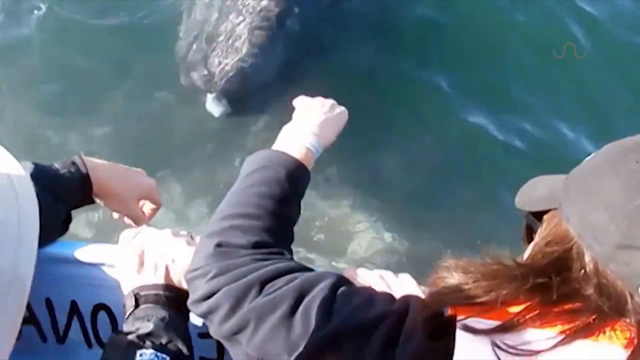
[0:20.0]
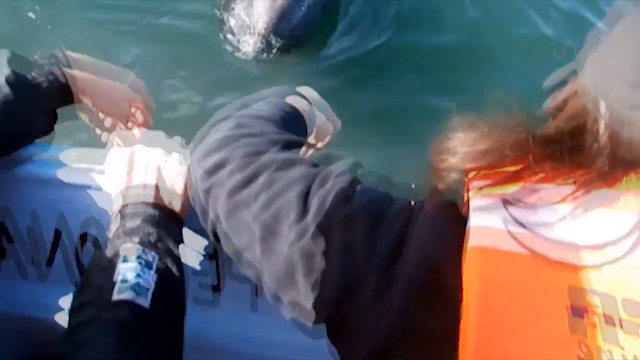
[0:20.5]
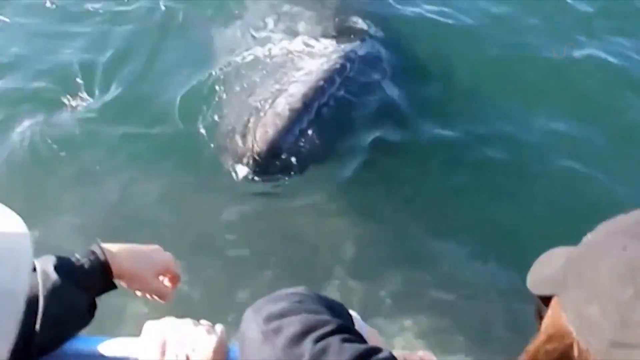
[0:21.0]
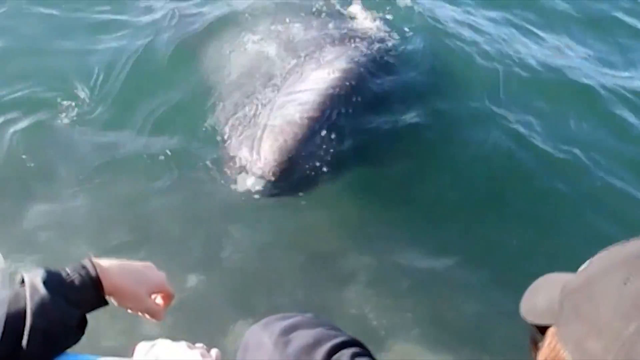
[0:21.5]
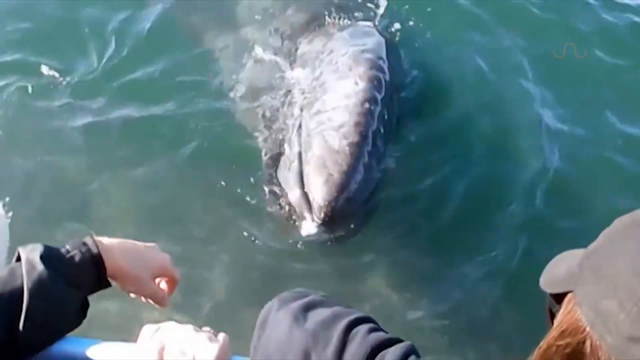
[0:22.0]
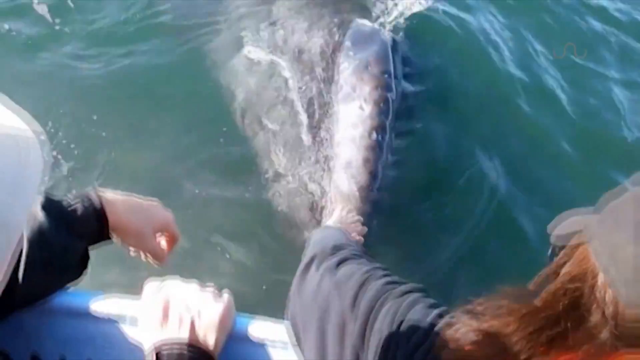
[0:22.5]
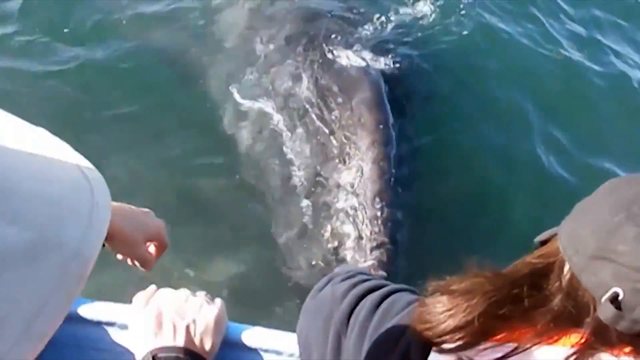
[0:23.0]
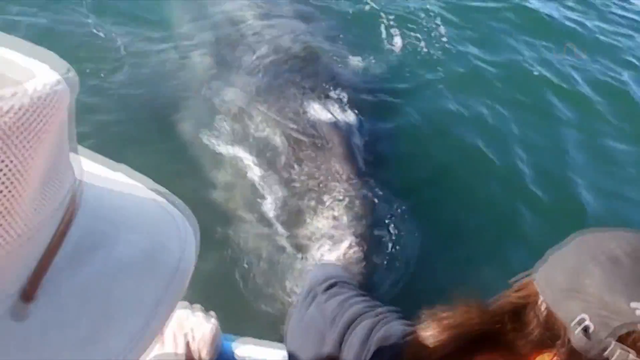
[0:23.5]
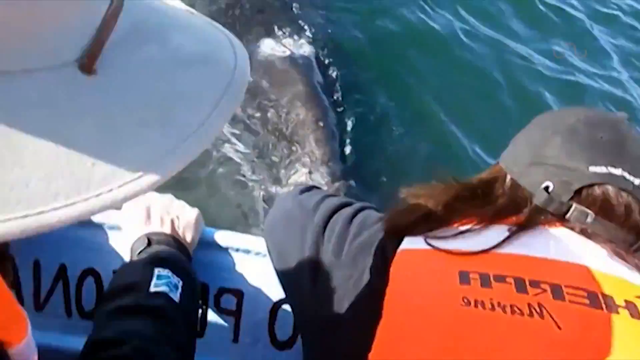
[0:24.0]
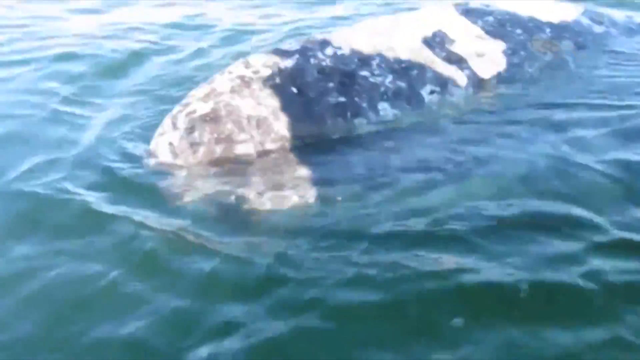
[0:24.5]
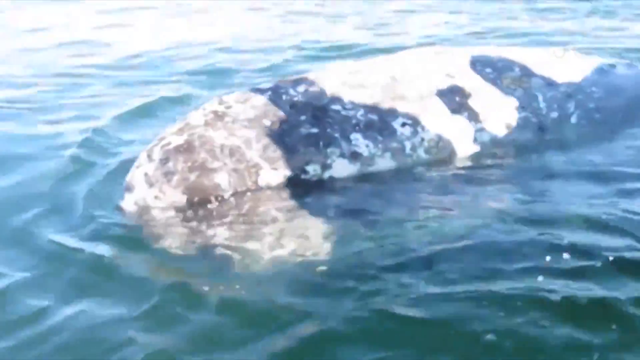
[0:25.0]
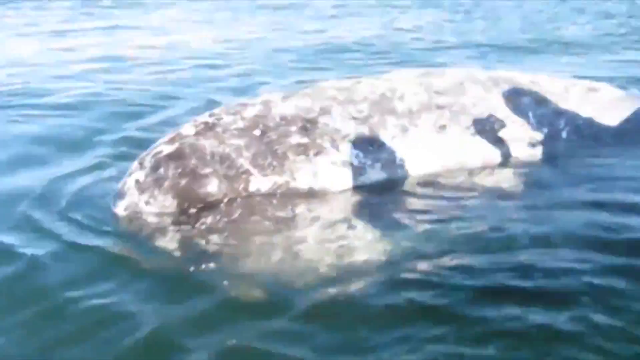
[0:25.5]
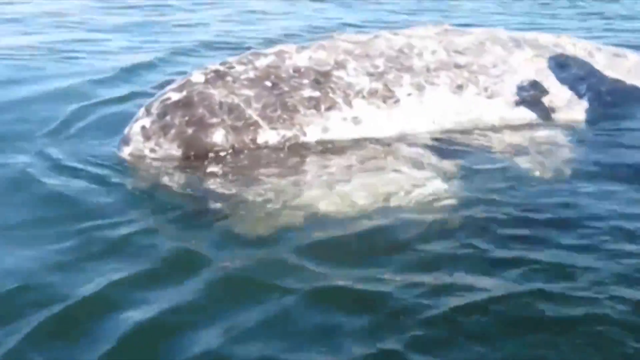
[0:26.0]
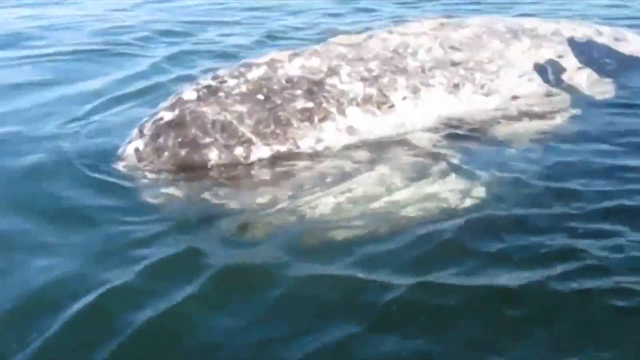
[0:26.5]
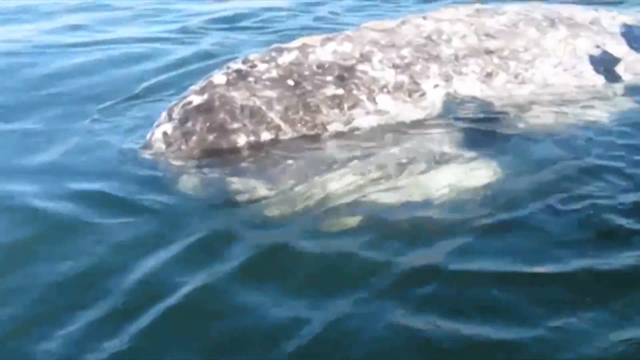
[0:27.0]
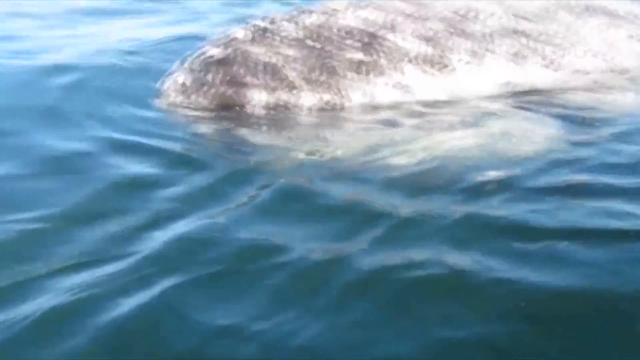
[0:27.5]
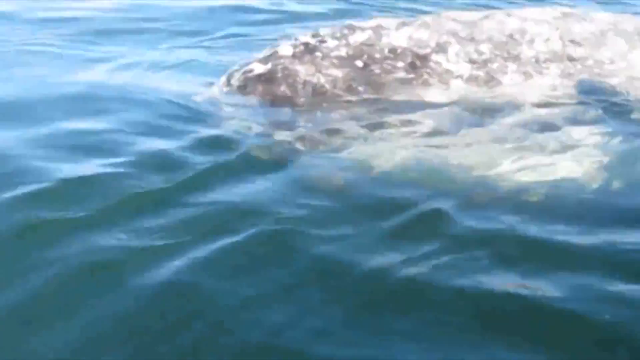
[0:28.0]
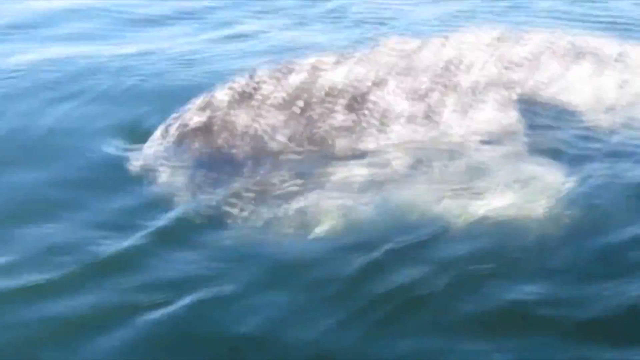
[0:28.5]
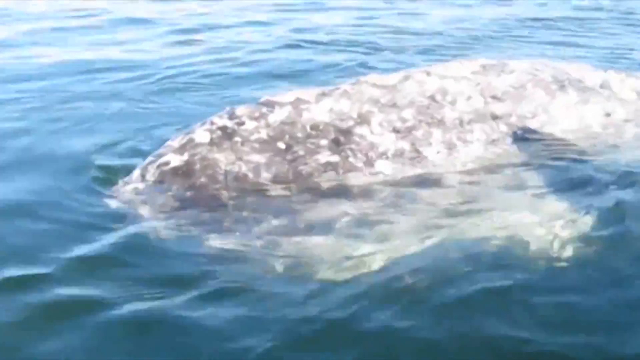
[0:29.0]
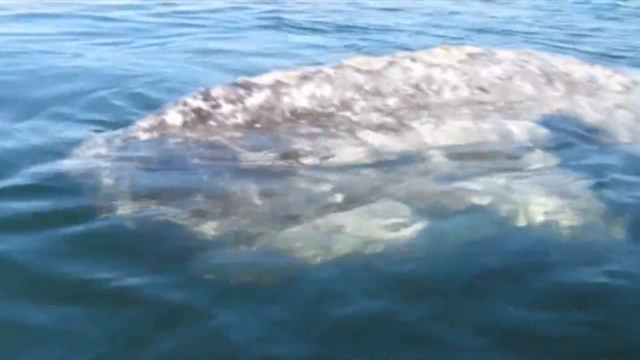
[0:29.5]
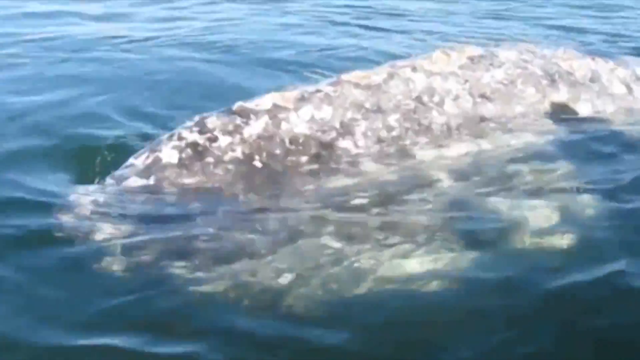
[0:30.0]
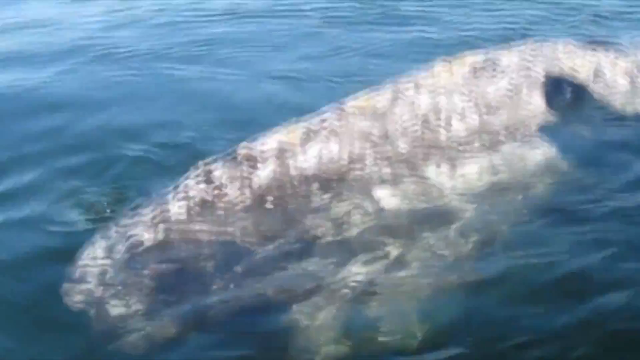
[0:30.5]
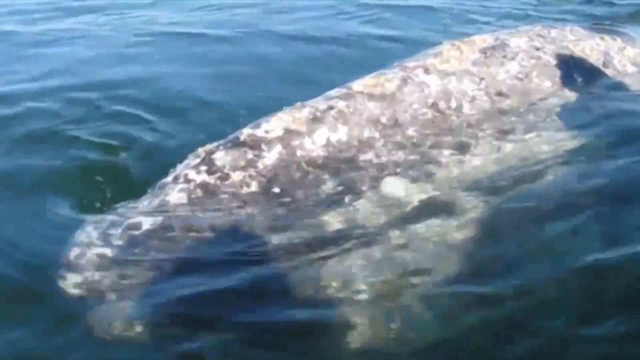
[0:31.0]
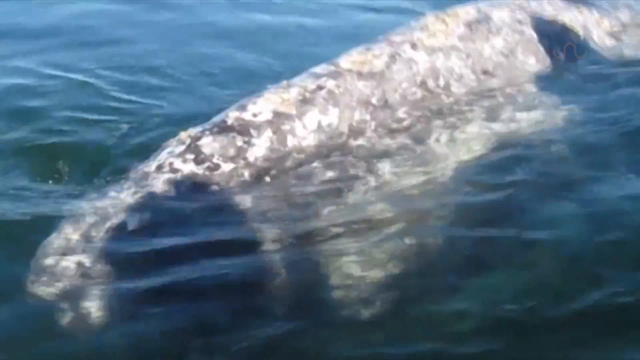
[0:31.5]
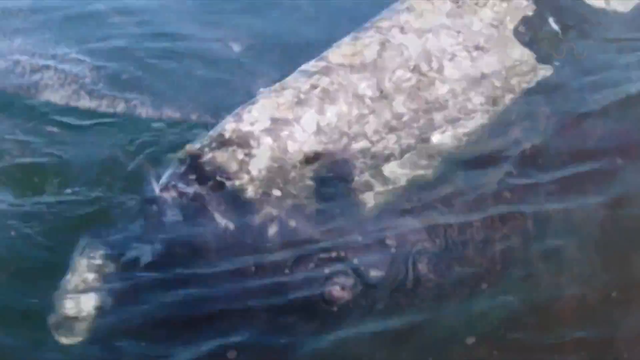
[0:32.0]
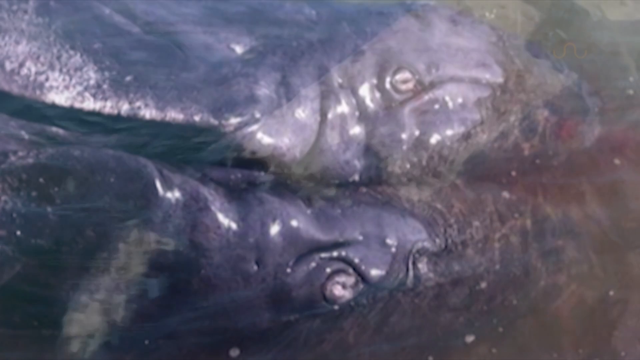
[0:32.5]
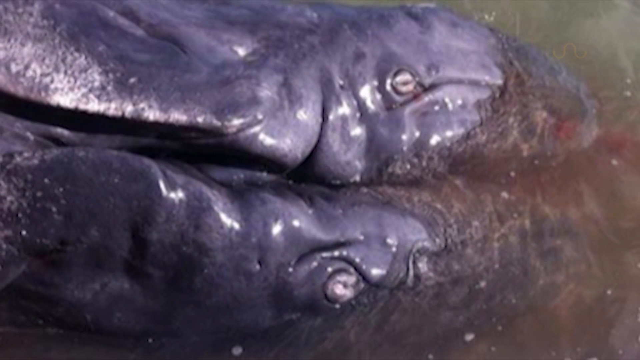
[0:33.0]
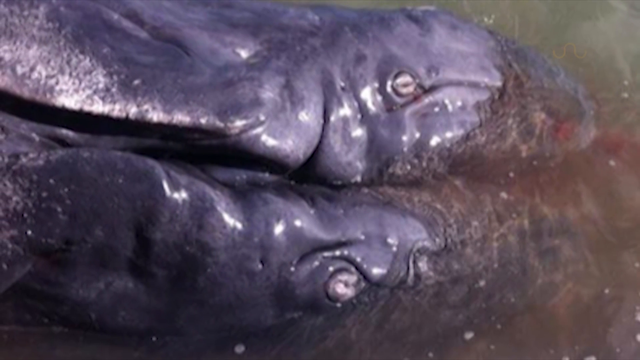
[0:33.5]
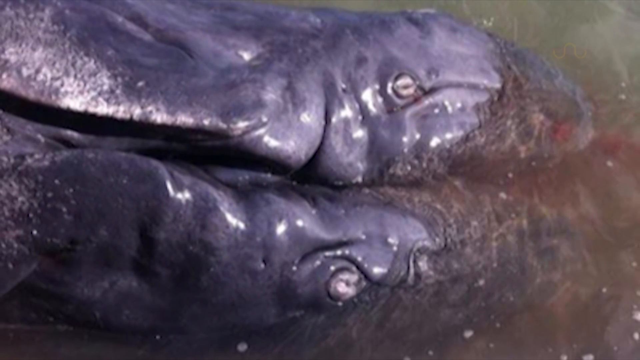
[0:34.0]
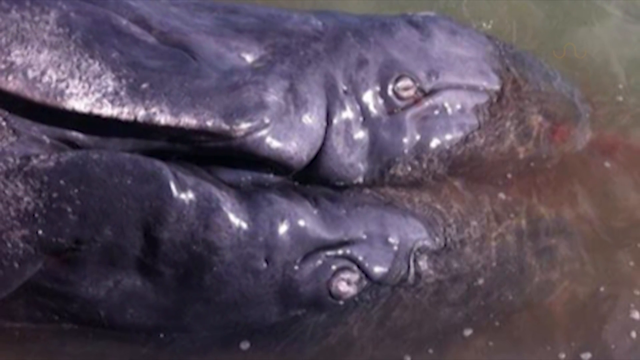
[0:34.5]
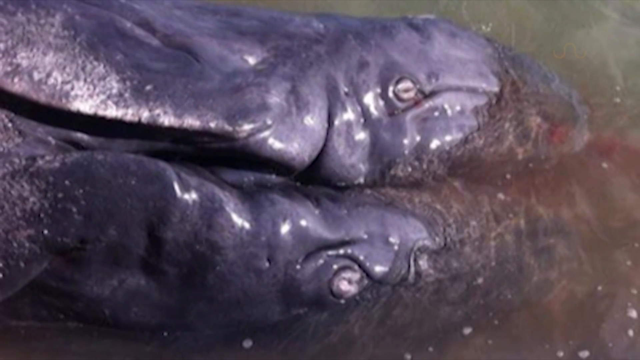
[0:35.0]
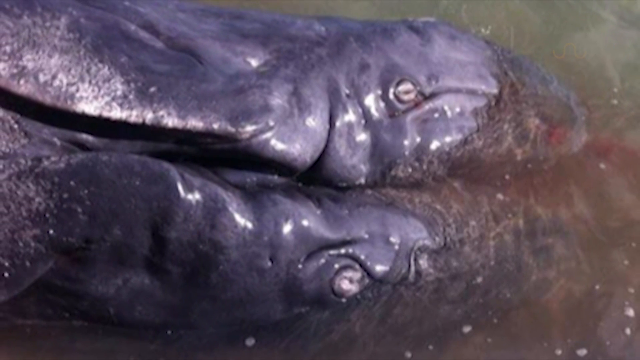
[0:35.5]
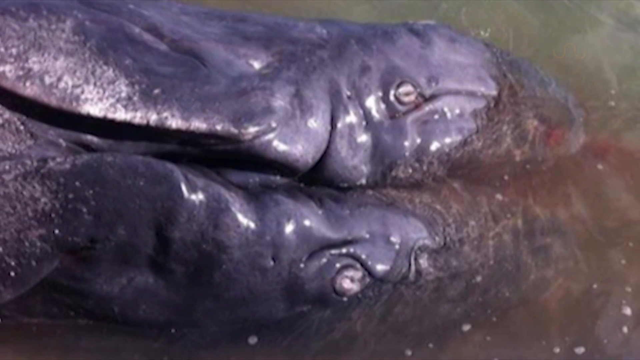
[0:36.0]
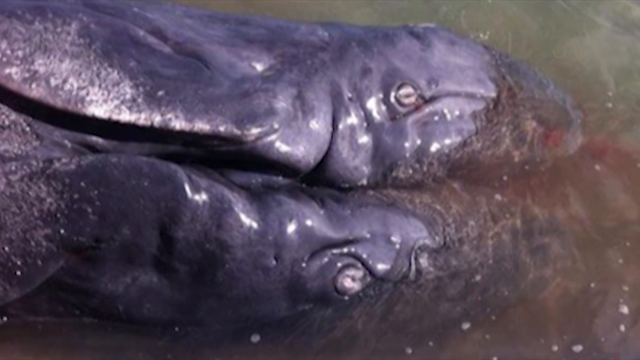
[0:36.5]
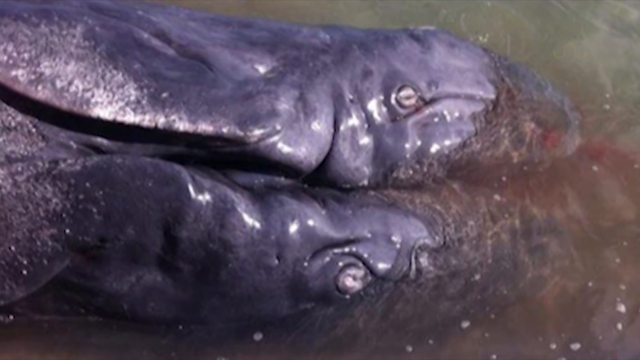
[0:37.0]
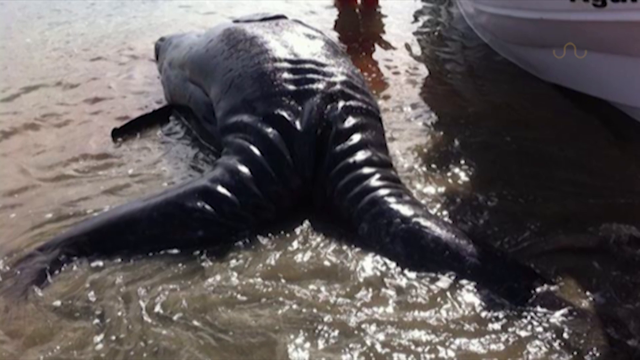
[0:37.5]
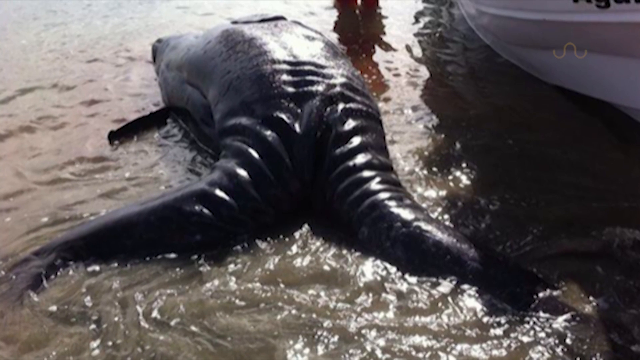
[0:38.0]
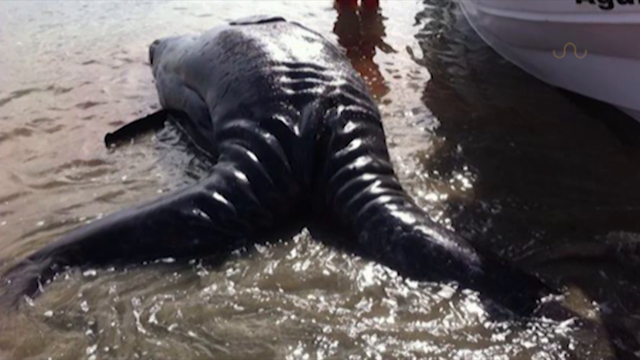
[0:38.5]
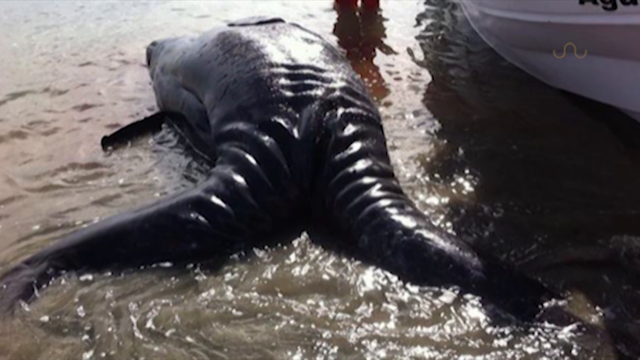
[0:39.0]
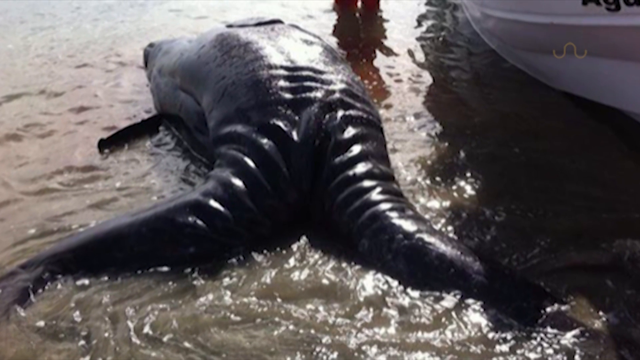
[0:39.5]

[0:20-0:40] An animal's head comes up out of a large body of water. The people, who appear to be white-skinned, lean over the boat as the animal surfaces; it appears to be a whale. Its body is visible and looks damaged, gray, white, or black, and it is kind of floating on the water. A close-up shows what appears to be two tails. The creature seems accustomed to the humans. There is a man, and a woman with a white hat. The animal seems to just float in the water; it is gray and looks like it has little hairs on its body. It then lies halfway in the water and halfway on the shore, and someone appears to be standing in the water beside it.